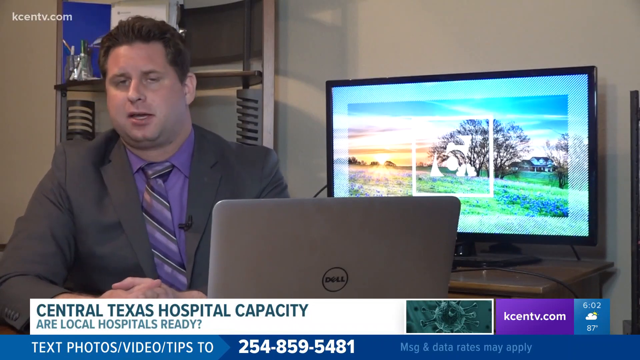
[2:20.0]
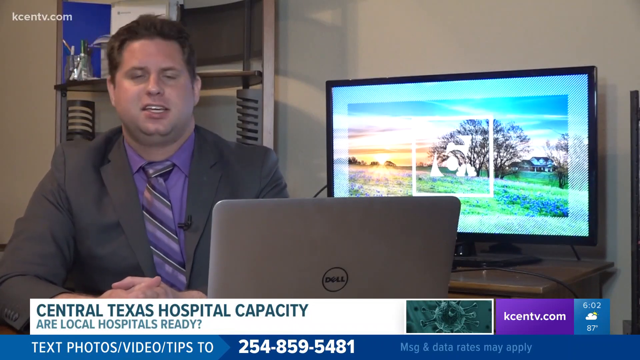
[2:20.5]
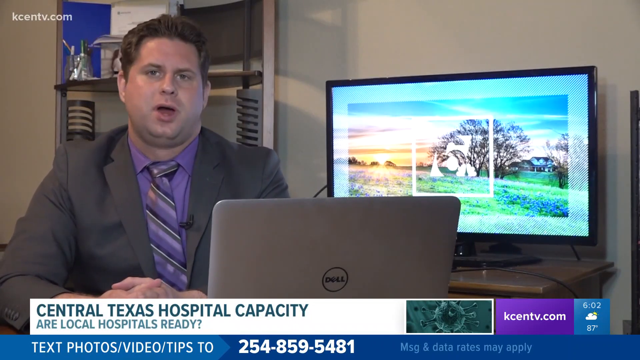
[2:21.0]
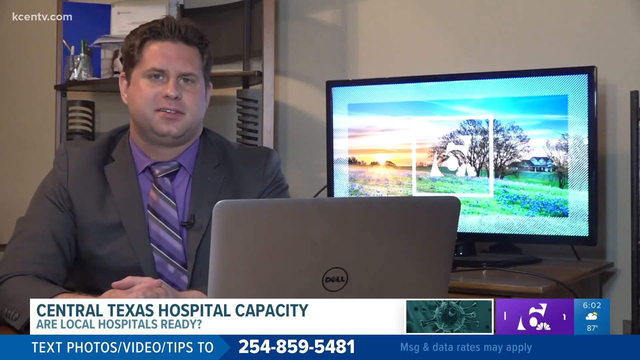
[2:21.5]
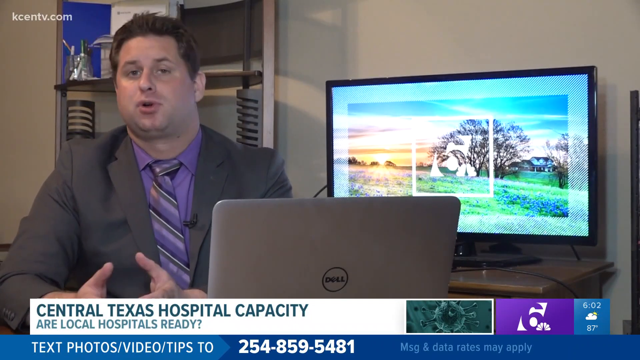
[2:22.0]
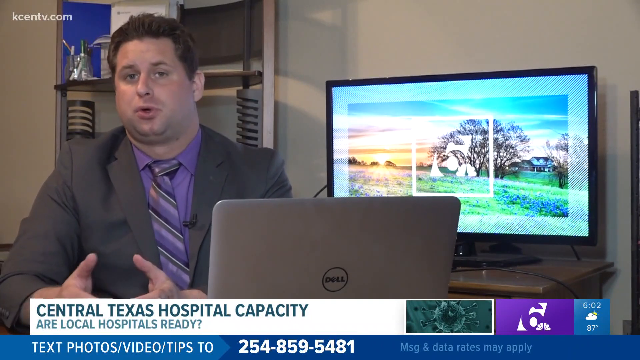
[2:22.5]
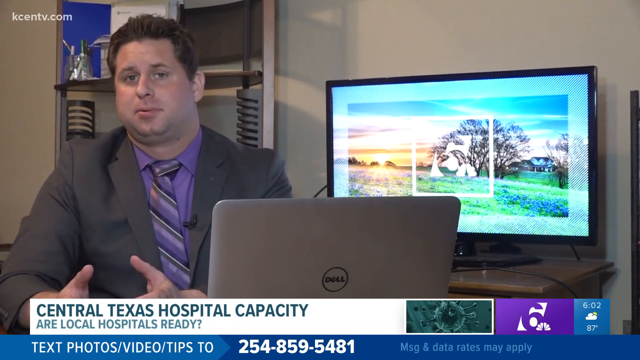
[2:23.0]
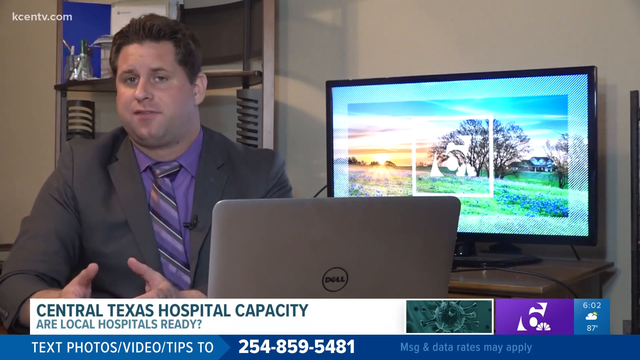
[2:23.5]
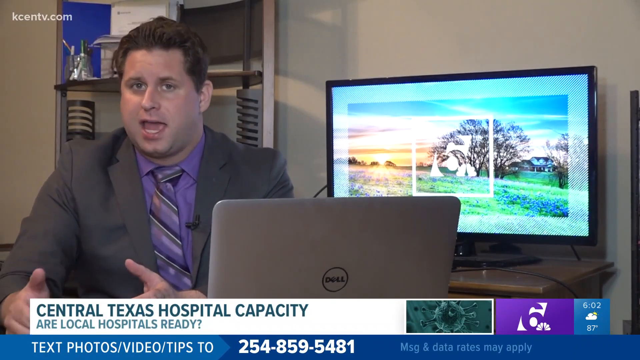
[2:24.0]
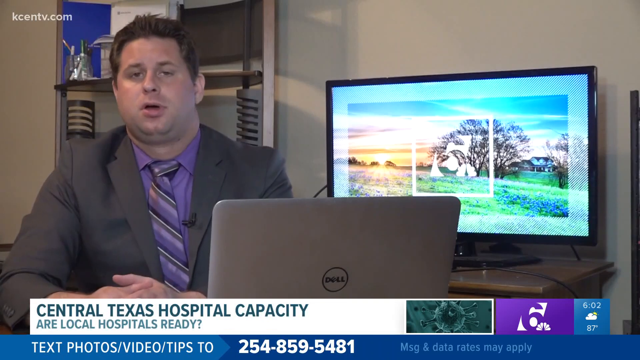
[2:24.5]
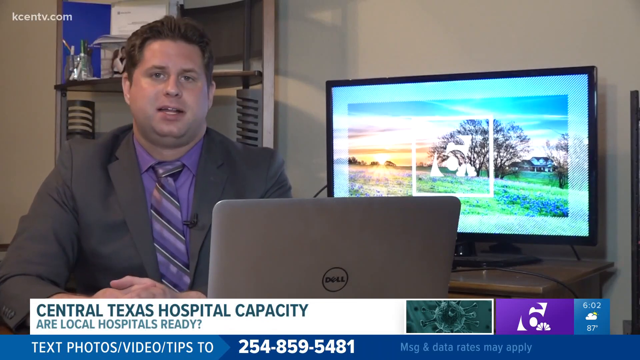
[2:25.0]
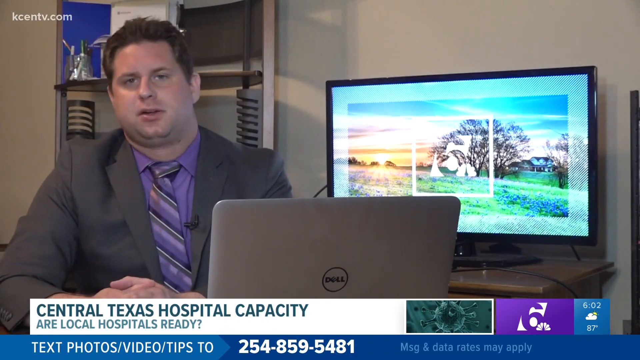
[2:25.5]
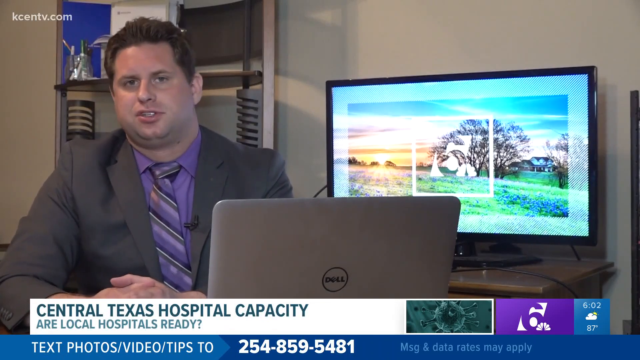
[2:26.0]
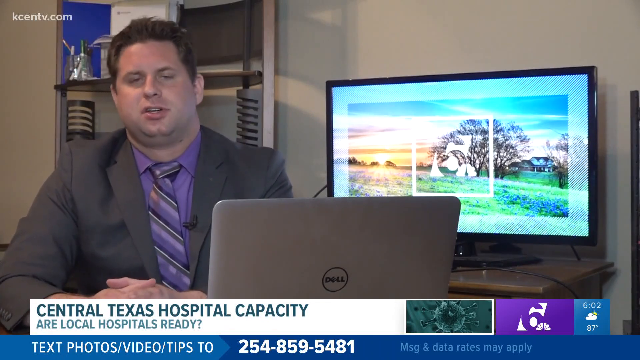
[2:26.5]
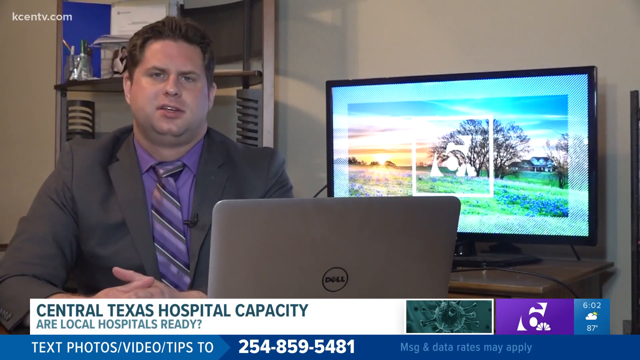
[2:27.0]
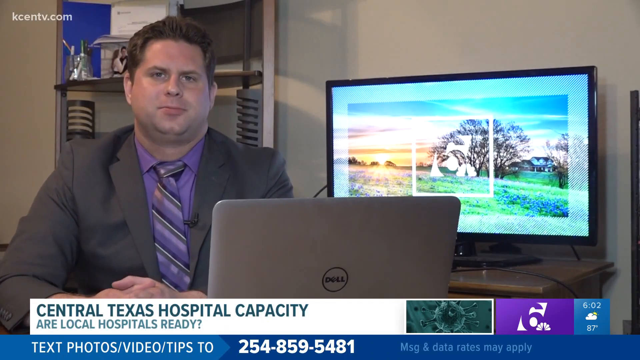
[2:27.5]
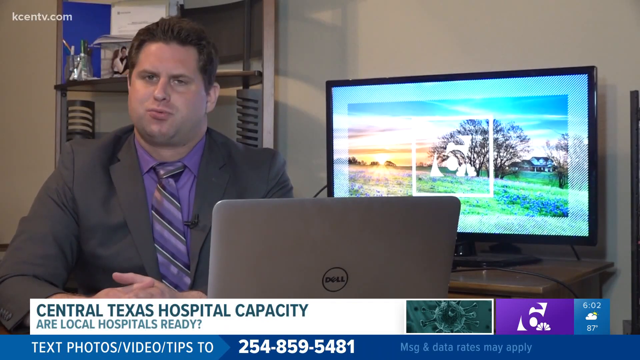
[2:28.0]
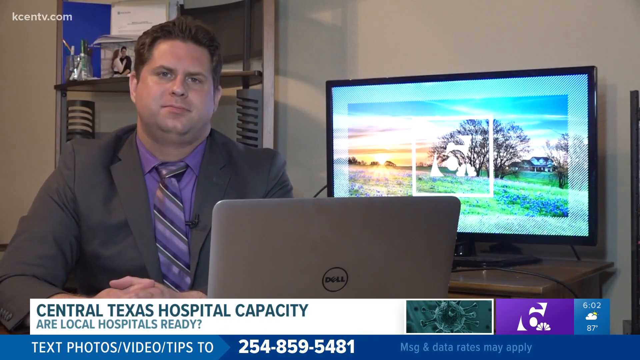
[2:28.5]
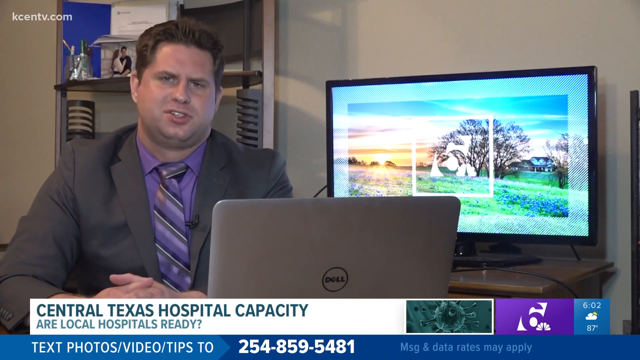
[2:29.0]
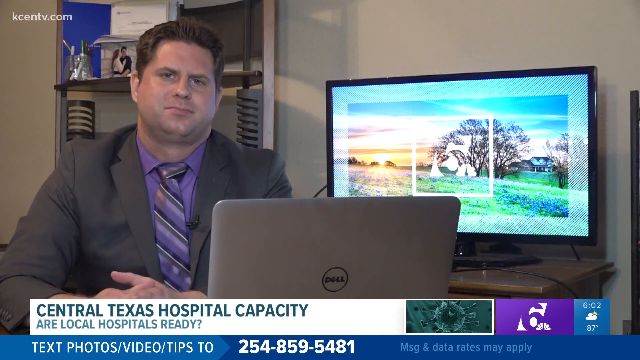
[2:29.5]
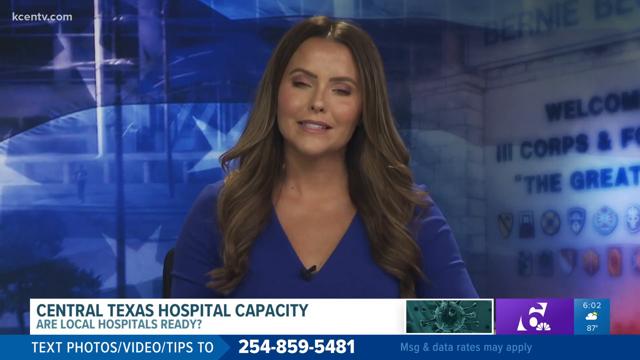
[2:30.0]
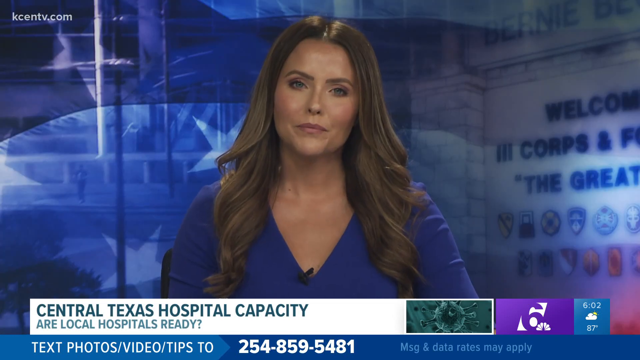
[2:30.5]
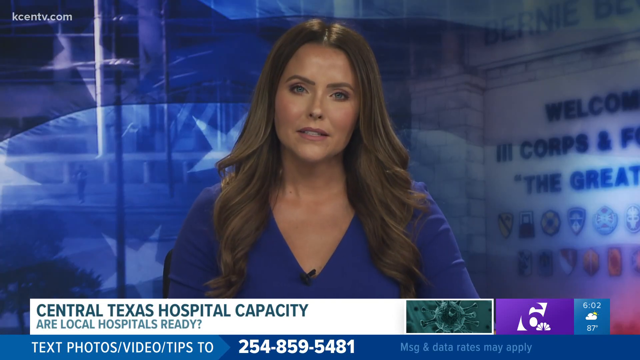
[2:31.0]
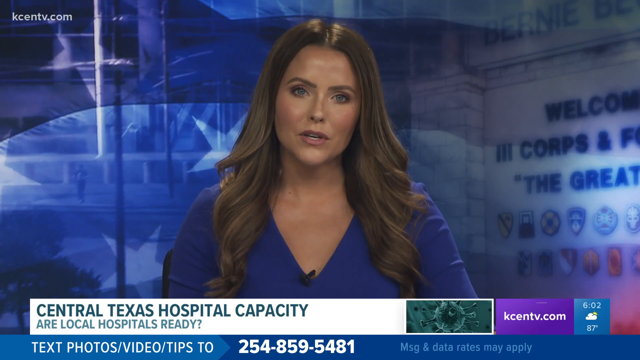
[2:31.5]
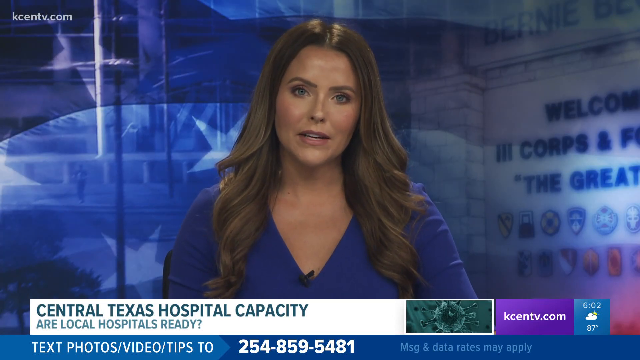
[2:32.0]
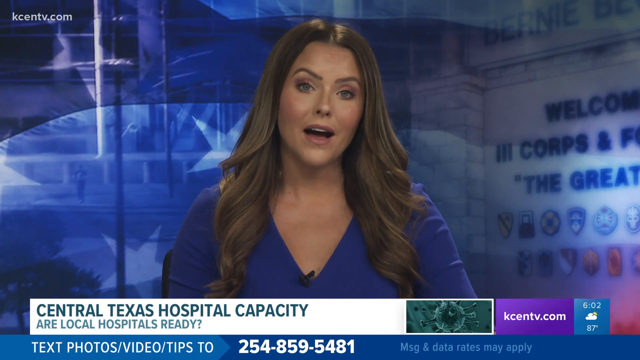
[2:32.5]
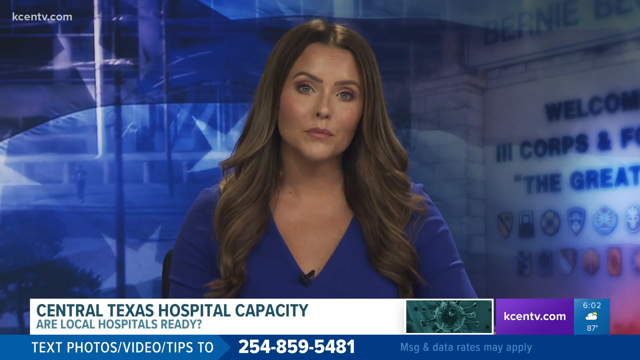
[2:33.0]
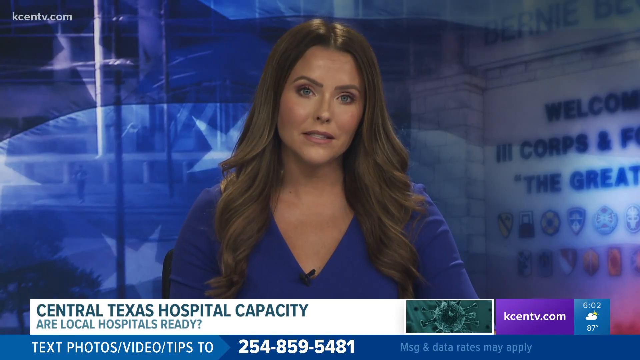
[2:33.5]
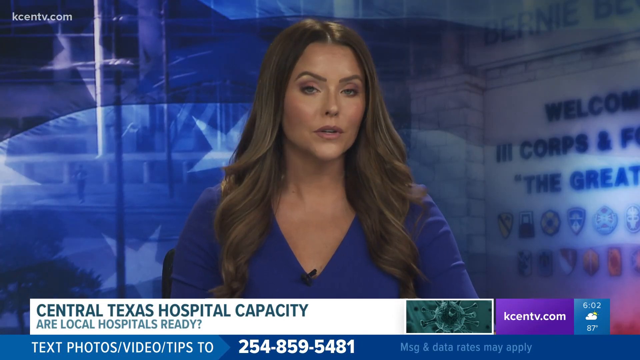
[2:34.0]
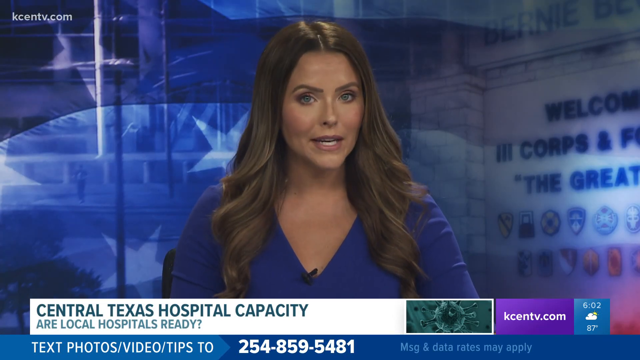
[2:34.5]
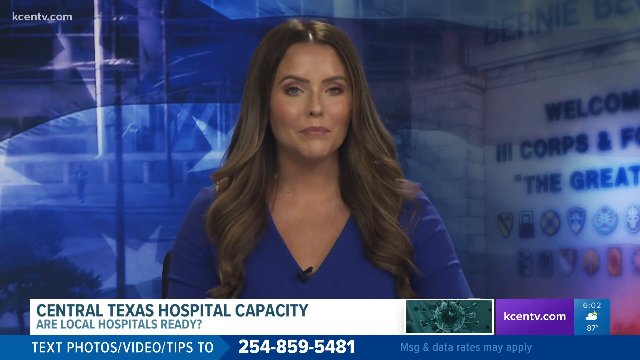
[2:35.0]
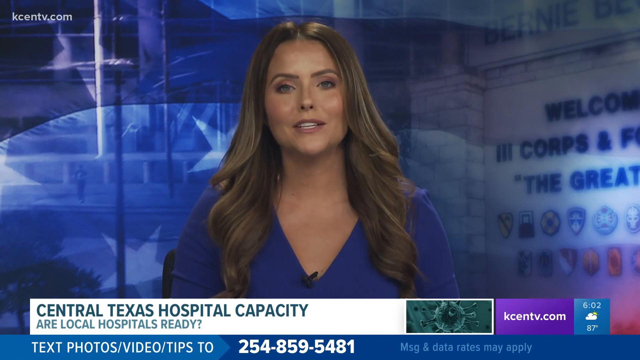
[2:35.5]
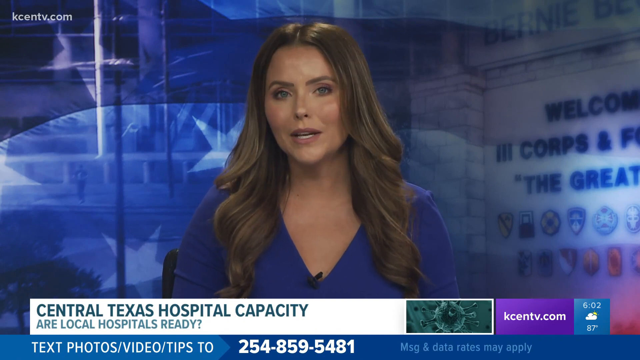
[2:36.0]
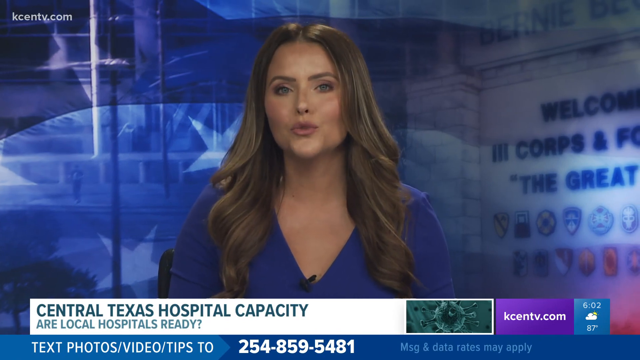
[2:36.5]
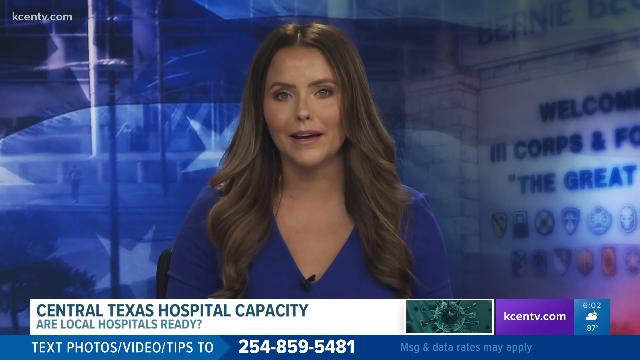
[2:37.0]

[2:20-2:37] The man in the gray suit speaks with a neutral expression. His hands are firmly on his desk, and he gestures with them a little, not in an exaggerated way; he tries to keep them clasped together, opens one slightly, then closes it right back. After a few seconds, the video returns to the female anchor from the beginning, in the newsroom, with long hair and a blue shirt, sitting at a desk. Behind her is a heavily digital blue background with a little shade of purple, with words on the side reading "welcome" and something about "core", some emblems underneath, and the name "Bernie" on top.